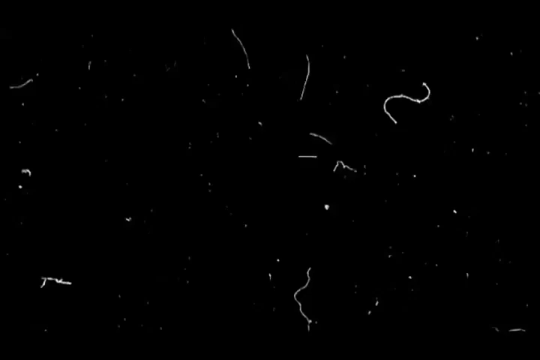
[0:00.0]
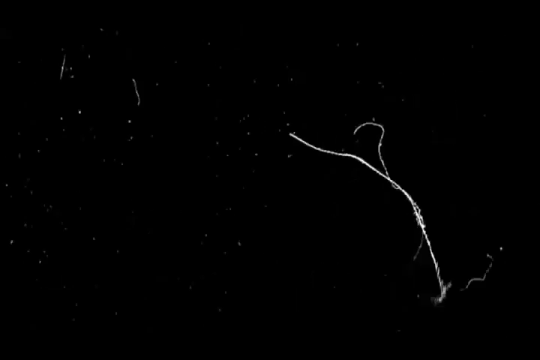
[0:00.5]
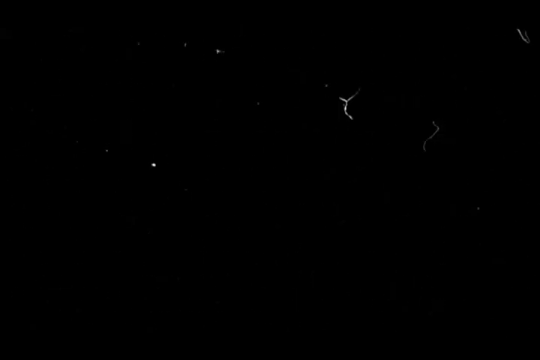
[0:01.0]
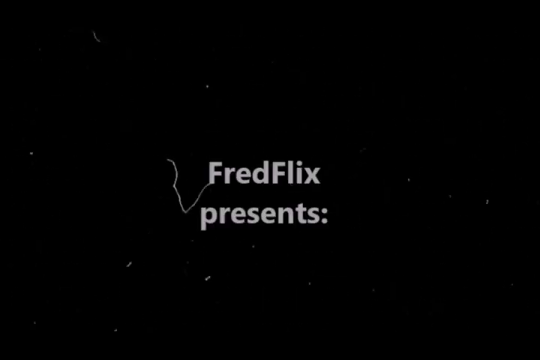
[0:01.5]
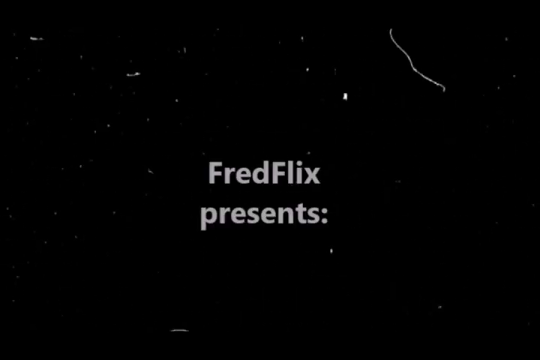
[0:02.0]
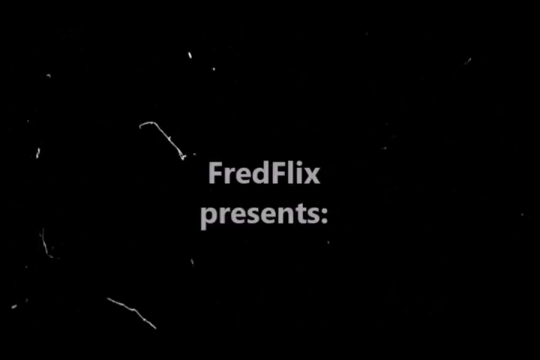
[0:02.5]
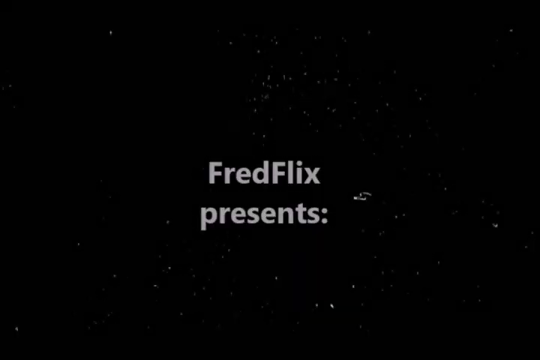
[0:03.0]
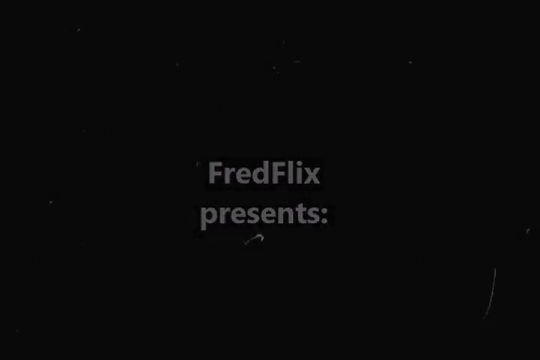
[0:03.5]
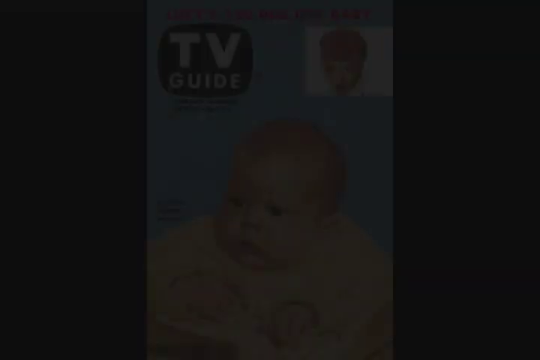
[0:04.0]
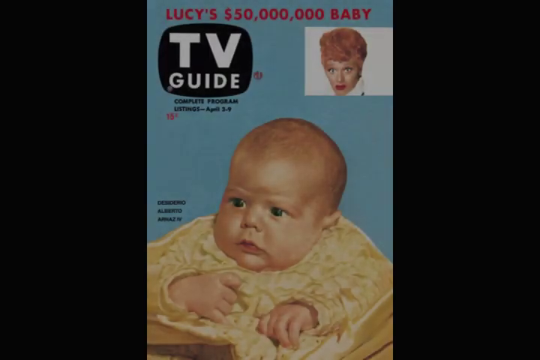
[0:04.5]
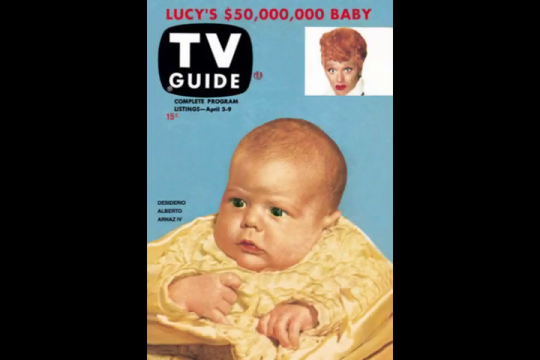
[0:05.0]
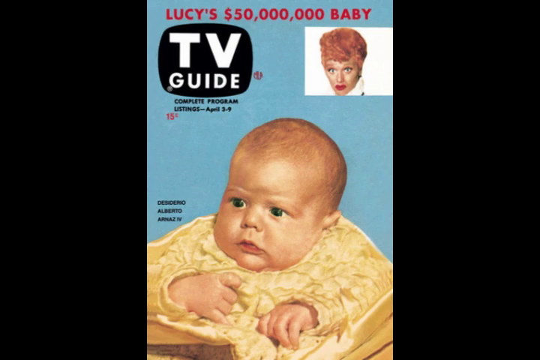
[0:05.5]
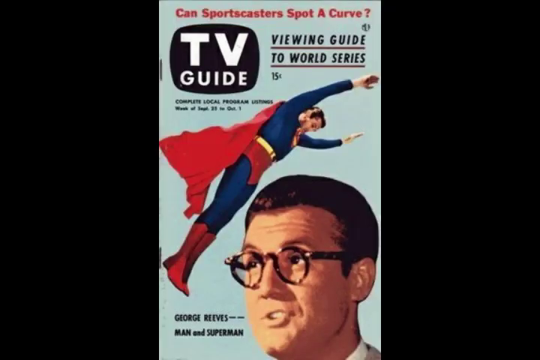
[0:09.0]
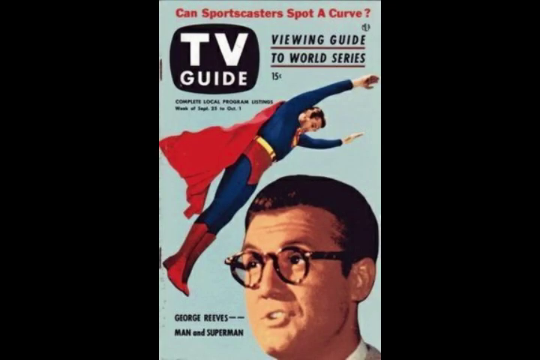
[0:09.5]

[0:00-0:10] The video opens on a black background with a flickering light of white dots, then the text "FredFlix film presents" appears. It transitions to a TV guide magazine cover with "Lucy's 50 million baby" written in red. The cover shows the face of a ginger-haired woman who looks surprised, on a white background, and below it a big image of a baby. The cover says "complete program" and the date is in April. Another TV guide image follows, showing Superman flying with his arm stretched out and, below him, a bespectacled man. Red text on the cover says "can spotcasters spot a curve", with "viewing guide to watch series" below it, and additional text reads "George Reeve, man and Superman".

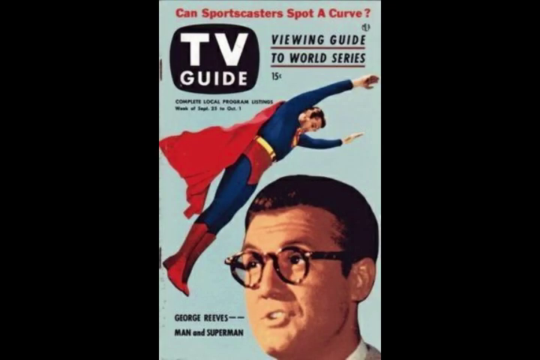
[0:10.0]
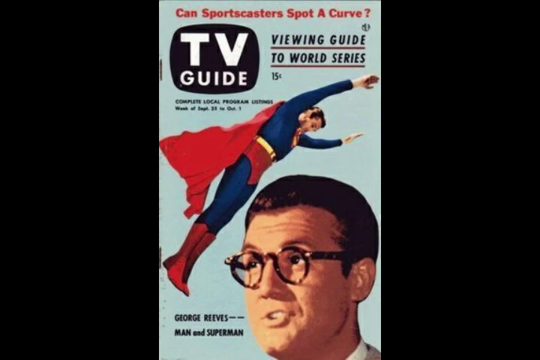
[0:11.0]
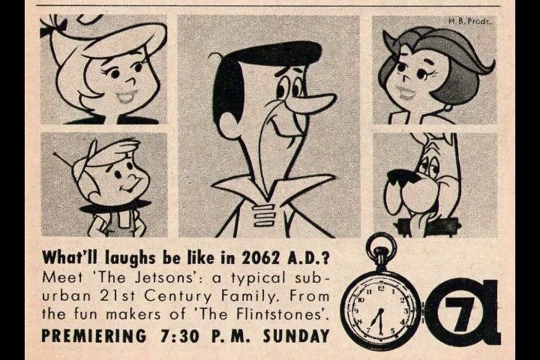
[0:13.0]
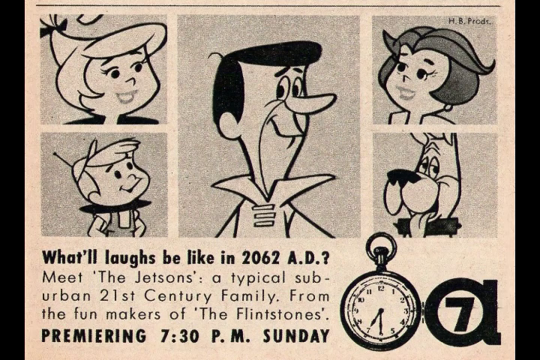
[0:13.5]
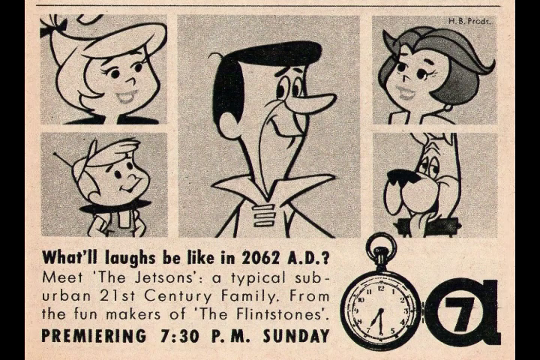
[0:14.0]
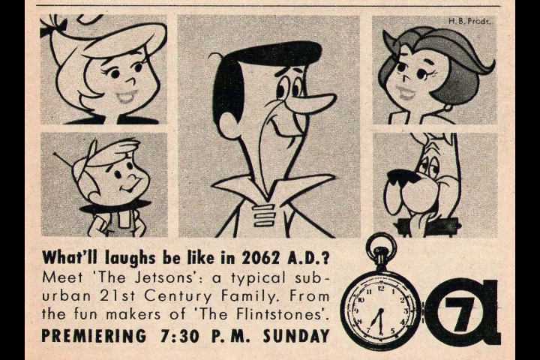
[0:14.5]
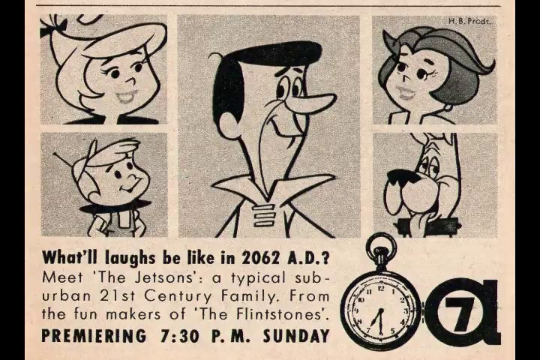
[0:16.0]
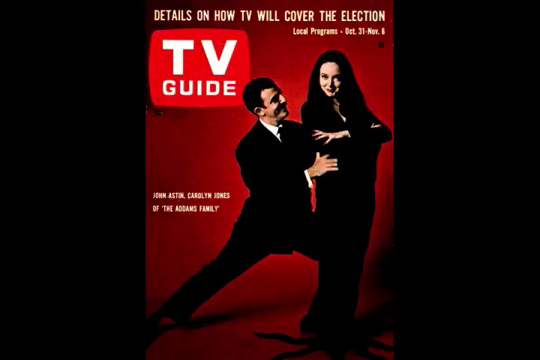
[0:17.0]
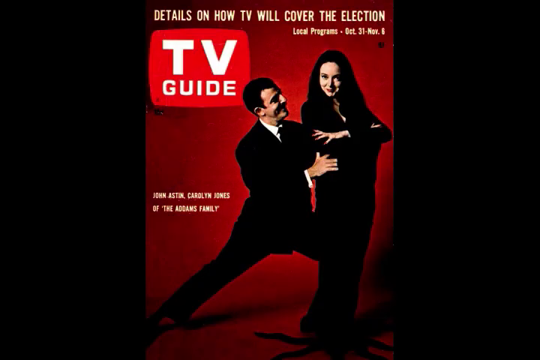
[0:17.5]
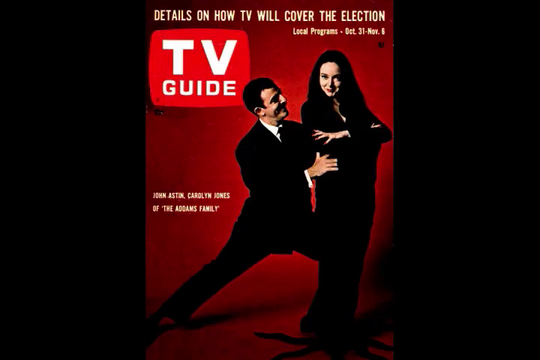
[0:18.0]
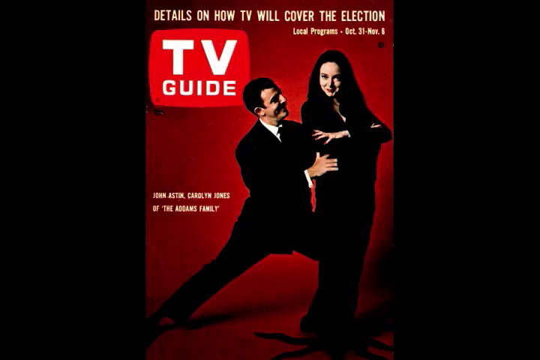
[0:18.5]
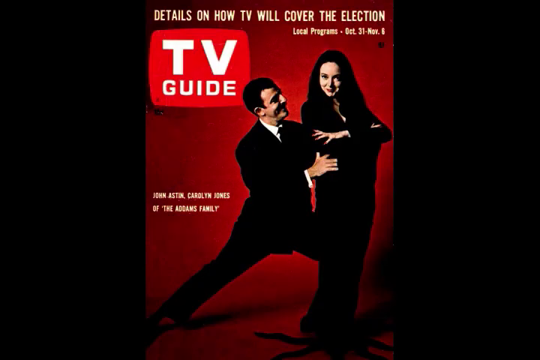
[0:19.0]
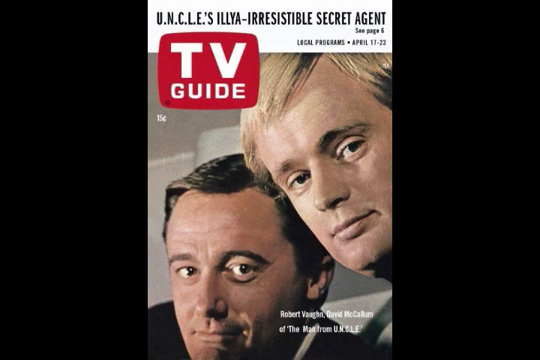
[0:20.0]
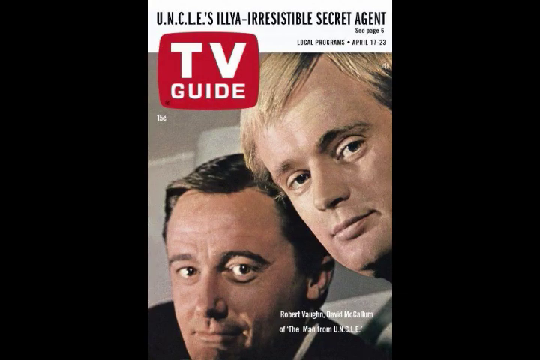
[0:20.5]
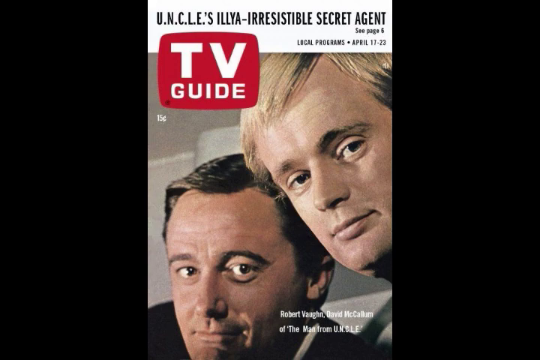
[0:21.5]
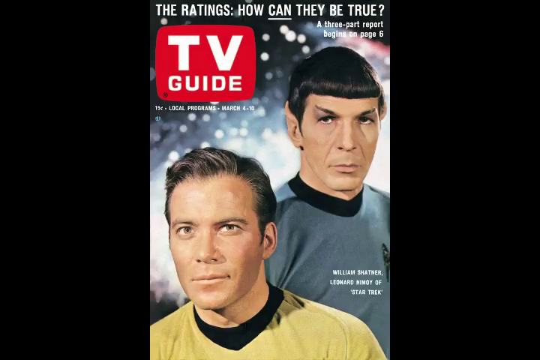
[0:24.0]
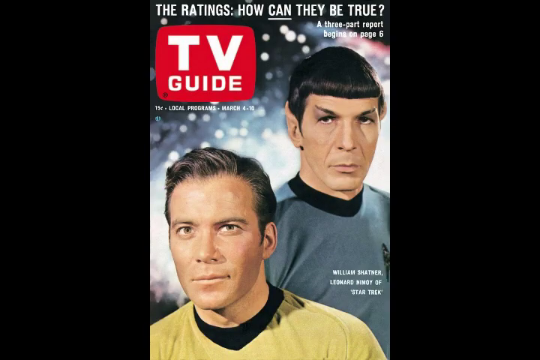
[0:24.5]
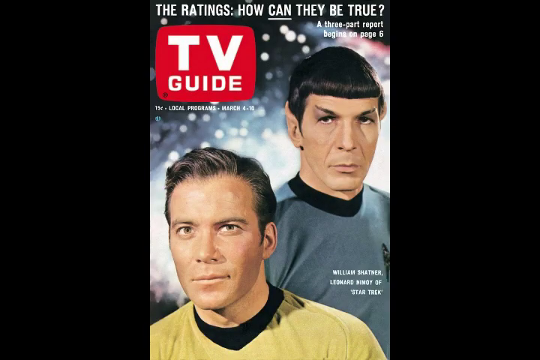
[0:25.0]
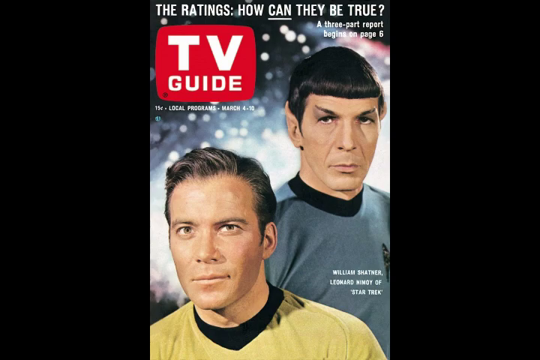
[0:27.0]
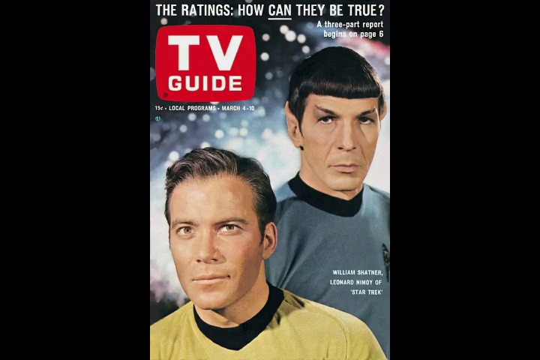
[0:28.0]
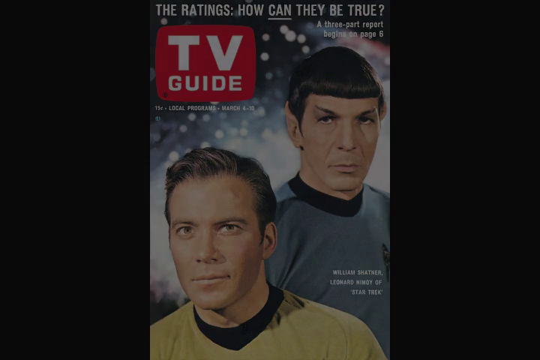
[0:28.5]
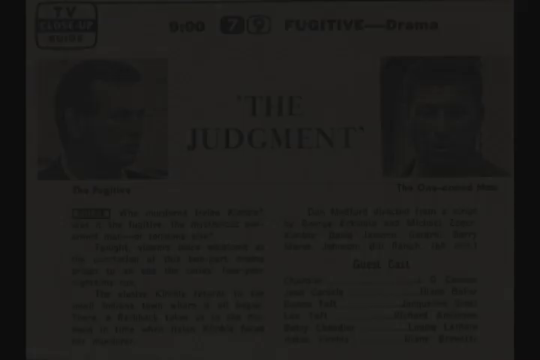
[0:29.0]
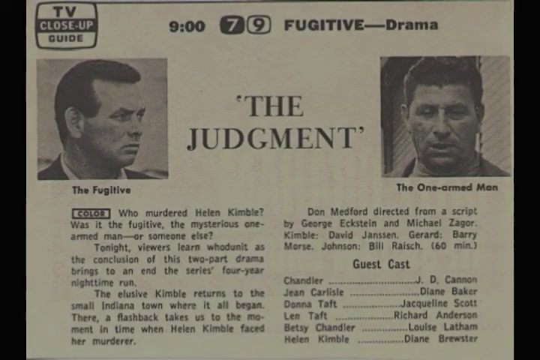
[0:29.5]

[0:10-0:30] A cartoon image of the Flintstones shows five Flintstone characters in frames. Below it, text says "what will life be like in 2062 A.D. meets the Jetsons, a typical suburban 21st century family from the filmmakers of the Flintstone premiering 7.30 on Sunday". To the side of the text are a clock and an image with a seven in a circle. Next comes a TV guide cover that says "details on how TV will cover the election", with "local programs, October 31st to November 8th" written in white. Its still image shows a woman in all black with her hands folded and a man in a black suit behind her grabbing her by the hips while stretching one leg and bending his knees. The background is blood red, and text reads "TV guide". Another cover follows with two images of men and text that says "irresistible secret agent", "see page six" and "local programs, April 17th to 23rd". The TV guide icon is in the top left-hand corner, and text in the bottom right-hand corner refers to "the man from the UNCLE".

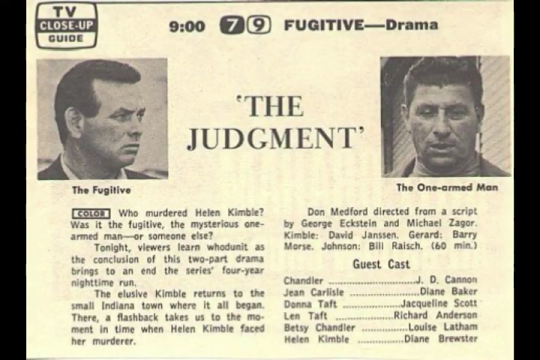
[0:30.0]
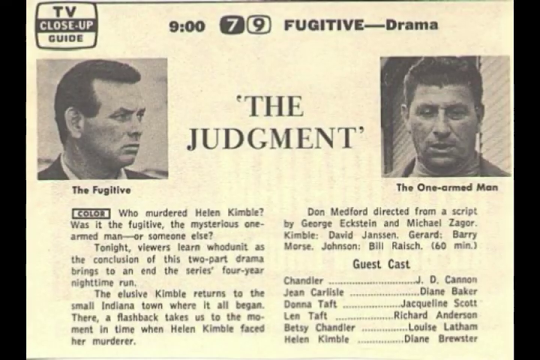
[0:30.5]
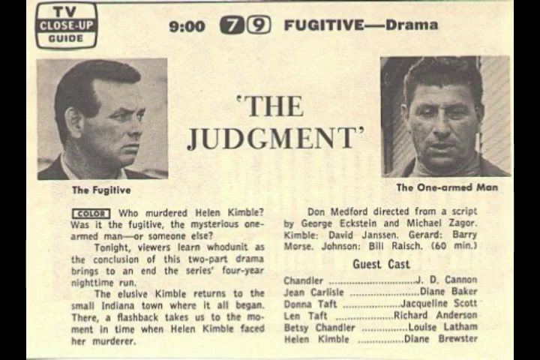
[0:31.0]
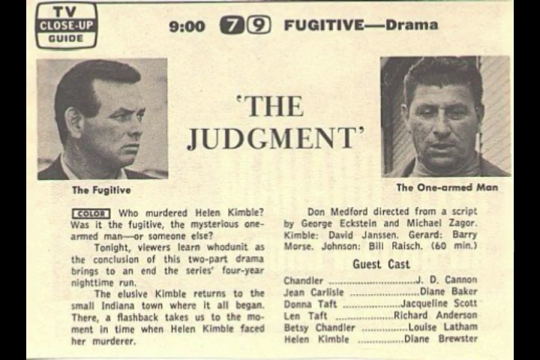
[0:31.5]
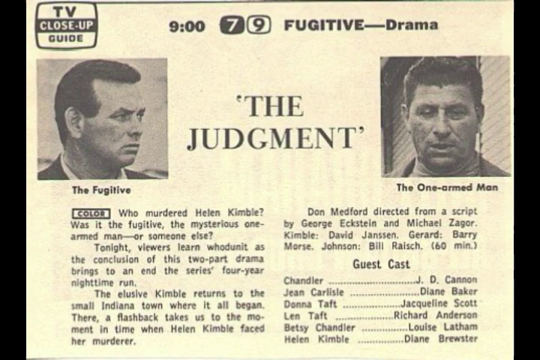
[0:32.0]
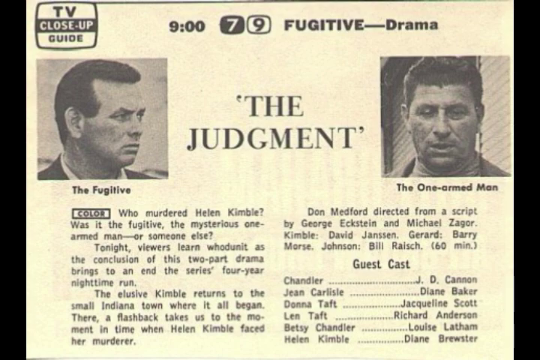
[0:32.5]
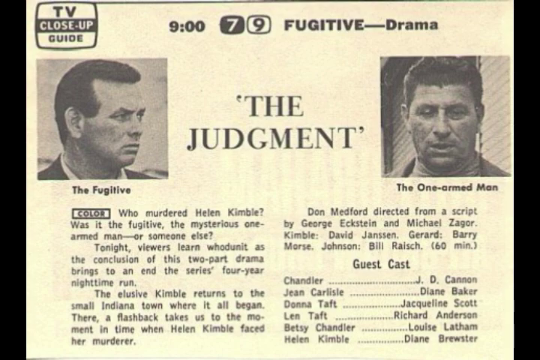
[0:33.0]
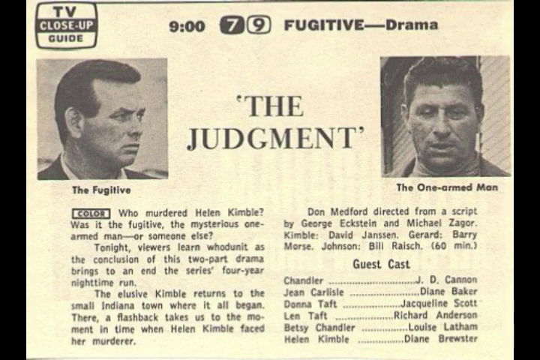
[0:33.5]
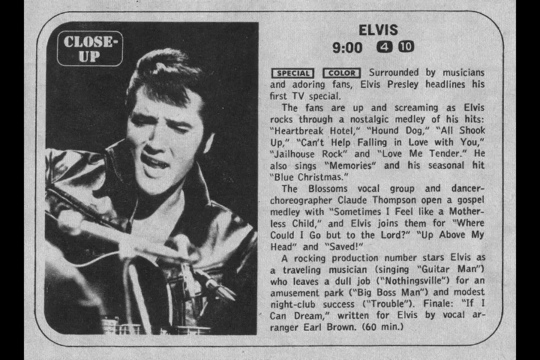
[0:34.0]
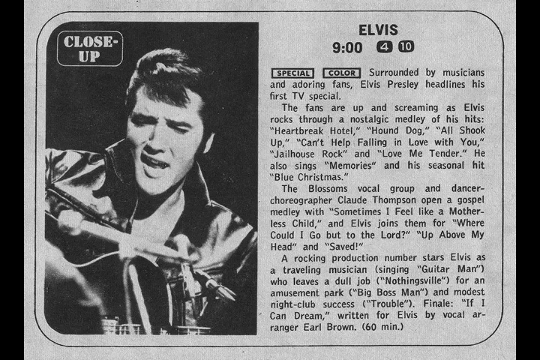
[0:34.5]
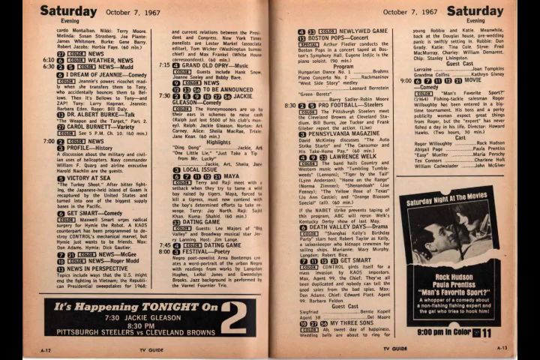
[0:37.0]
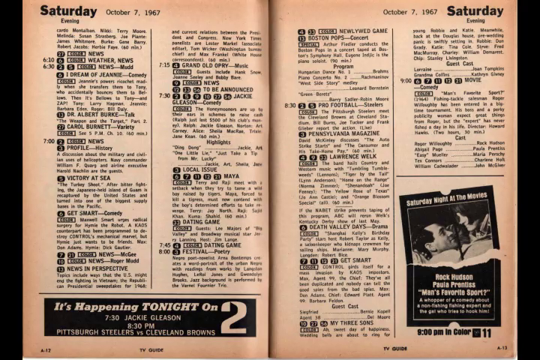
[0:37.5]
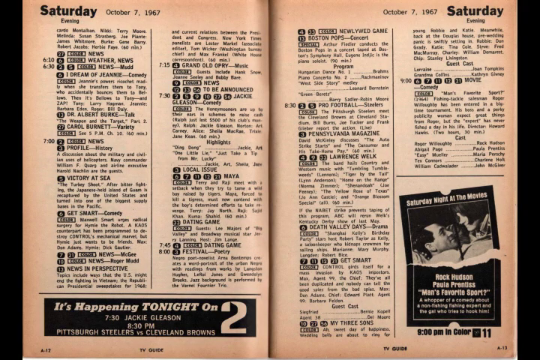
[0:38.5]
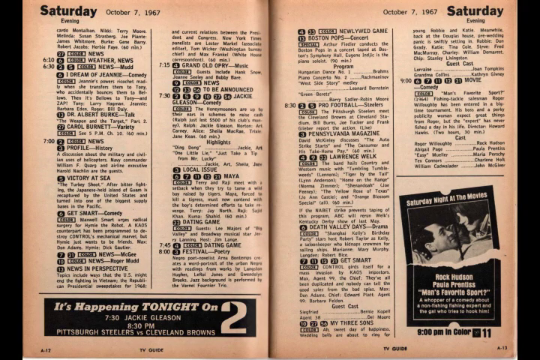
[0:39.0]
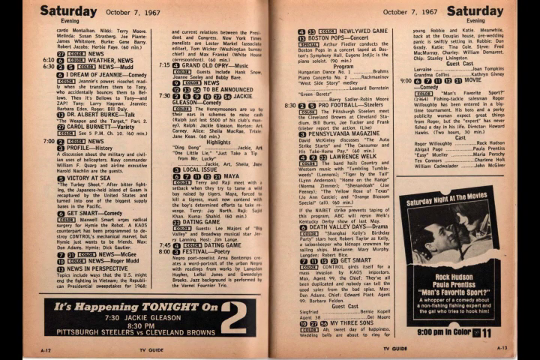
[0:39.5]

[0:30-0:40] An excerpt from a newspaper says "a TV close-up guide". On the left is a framed image of a dark-haired man captioned "the fugitive". On the right is a framed image of another man, also black-haired, captioned "the one armed man". Between the frames is the text "the judgment" in quotation marks, along with text that says "who murdered Ellen Kimball. Was it a fugitive, the mysterious one armed man, or someone else?" and a guest cast listing. Next is a black-and-white image of Elvis singing, strumming his guitar with his mouth open to the microphone, with the text "close-up". Text to the right of the image mentions Elvis. Various text from the magazine follows: the top left-hand corner says "Saturday, October 7, 1967", and the bottom section lists what is happening tonight on channel 2, with times of 7:30 and 8:30 and the name Gleason. In the bottom right-hand corner is an image of a man lying down in bed with a woman on top of him, captioned "rock Hudson".